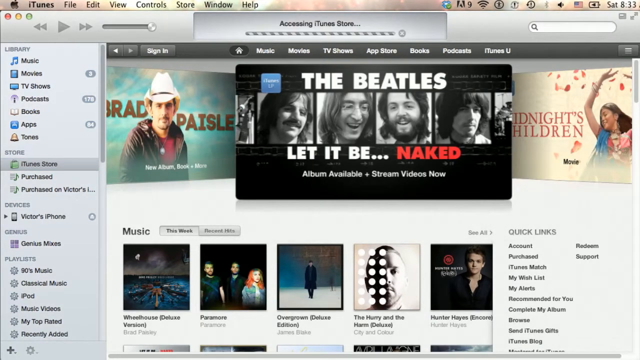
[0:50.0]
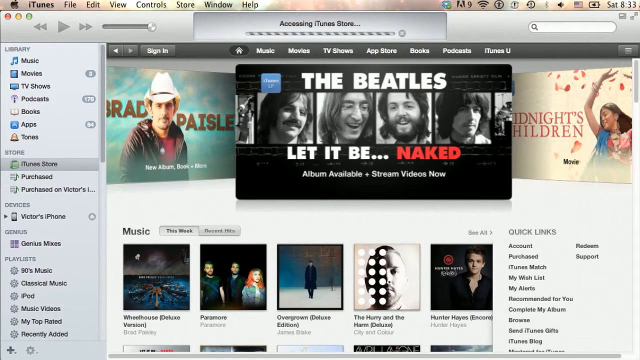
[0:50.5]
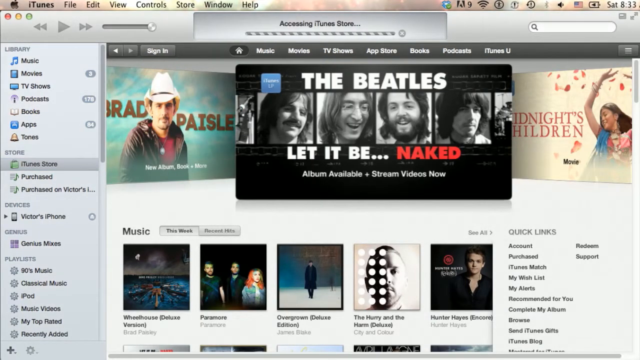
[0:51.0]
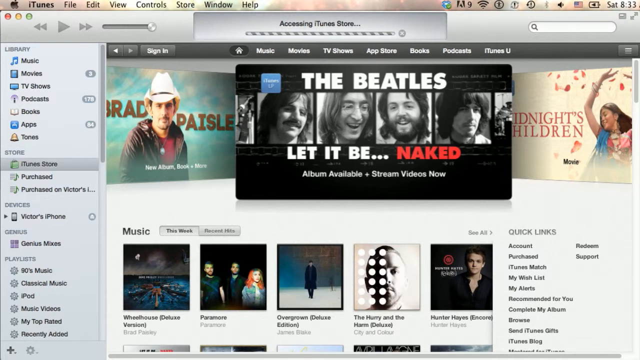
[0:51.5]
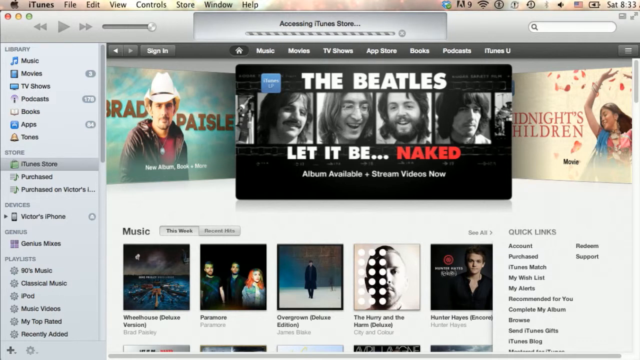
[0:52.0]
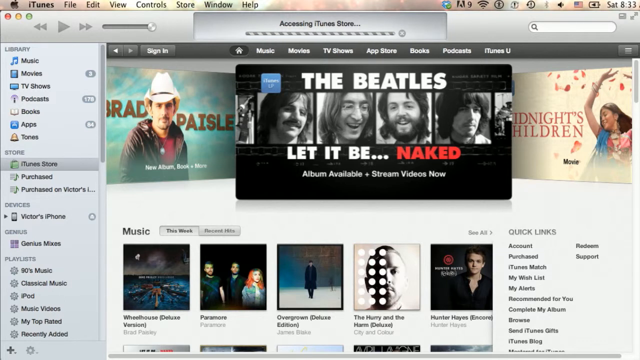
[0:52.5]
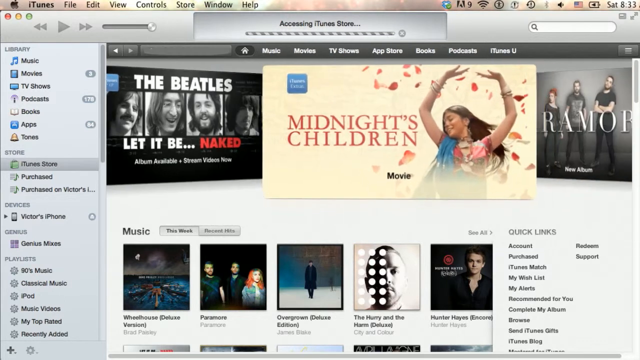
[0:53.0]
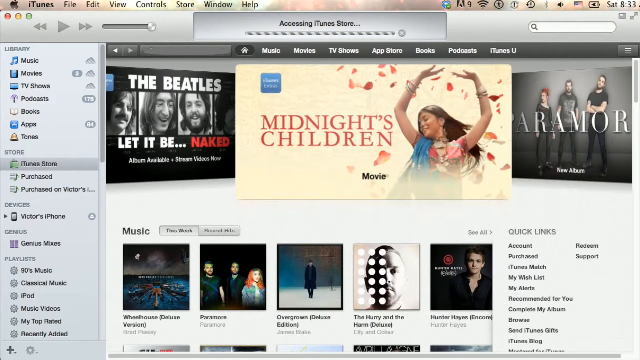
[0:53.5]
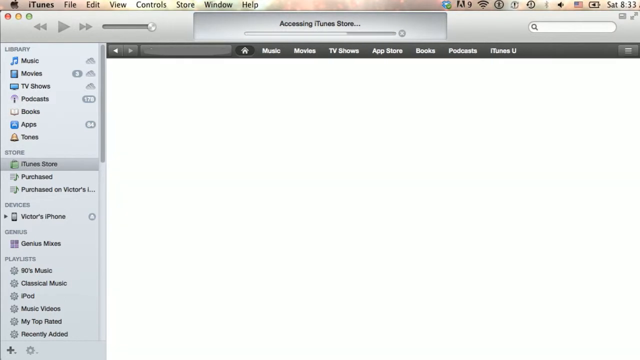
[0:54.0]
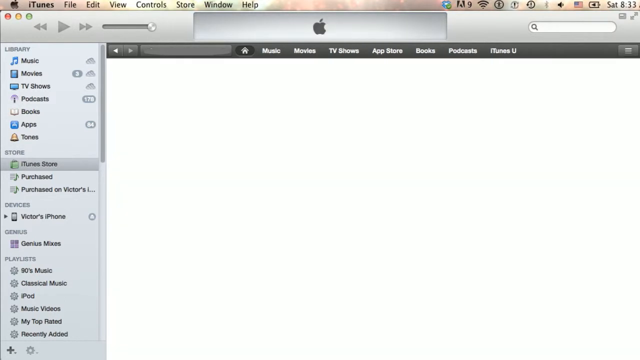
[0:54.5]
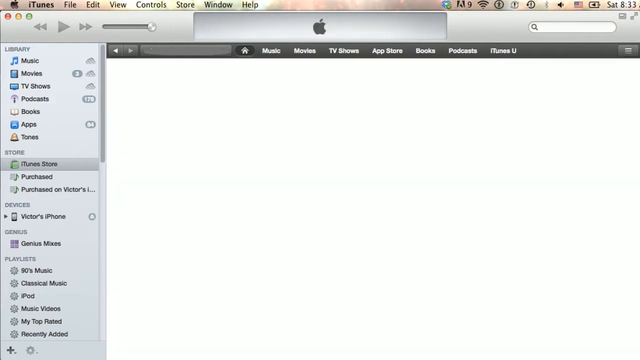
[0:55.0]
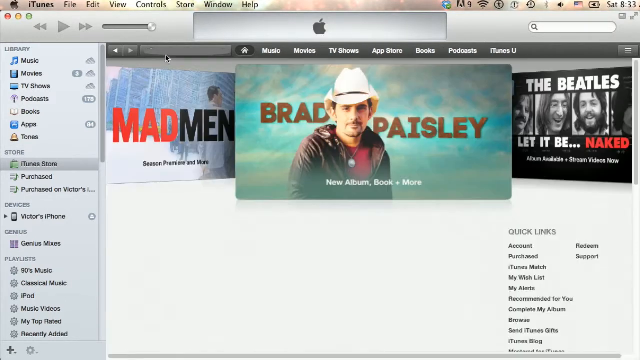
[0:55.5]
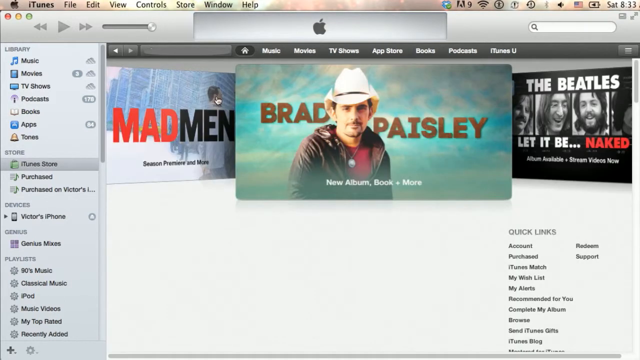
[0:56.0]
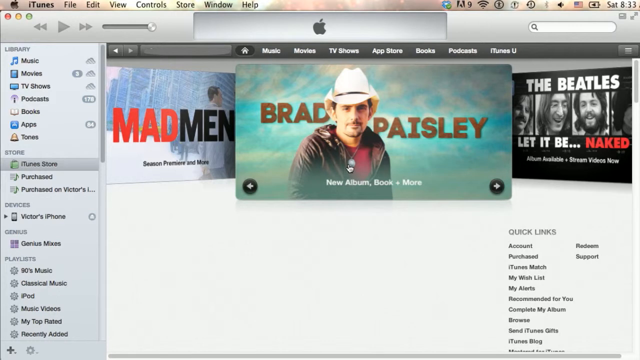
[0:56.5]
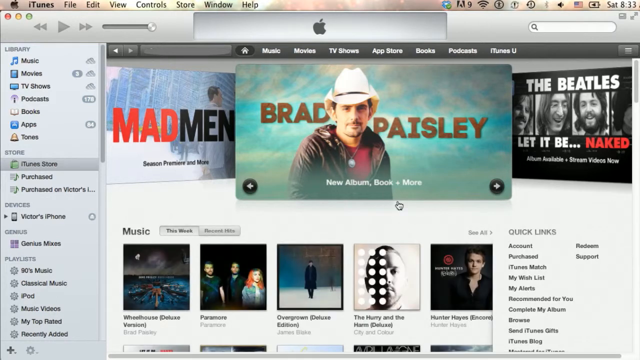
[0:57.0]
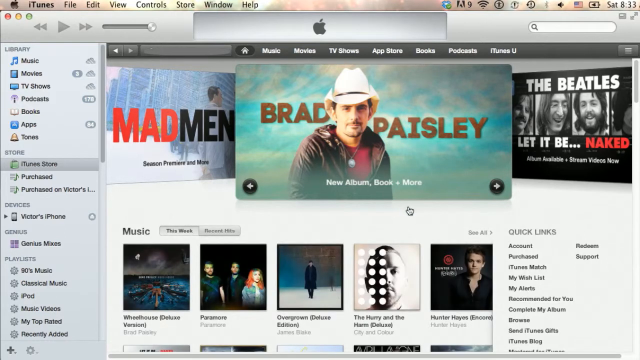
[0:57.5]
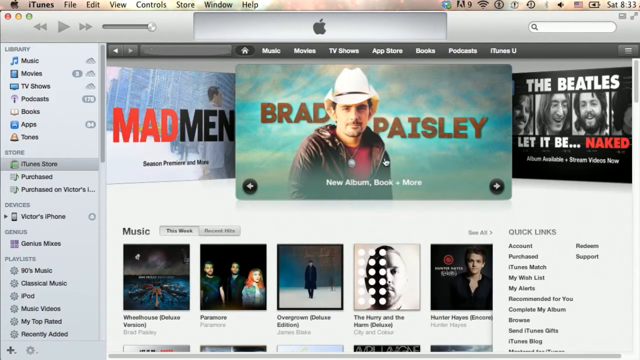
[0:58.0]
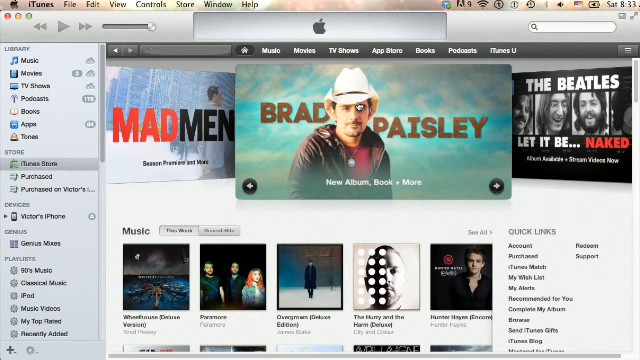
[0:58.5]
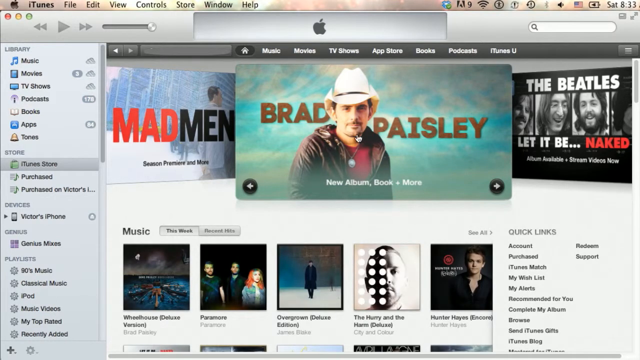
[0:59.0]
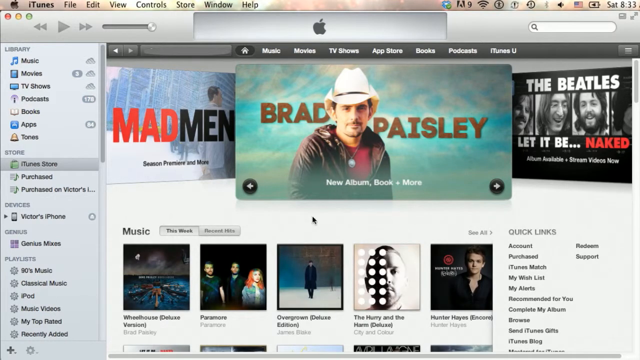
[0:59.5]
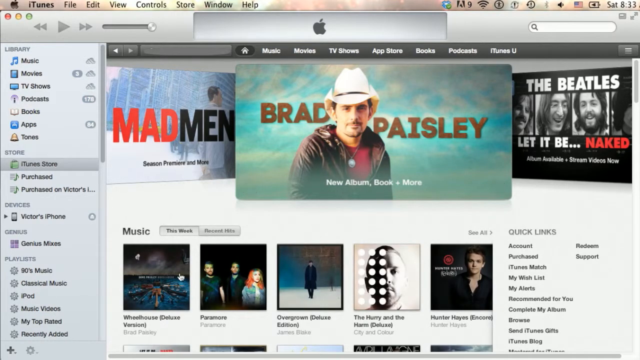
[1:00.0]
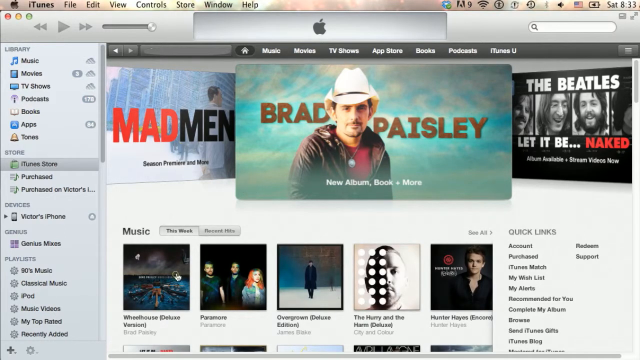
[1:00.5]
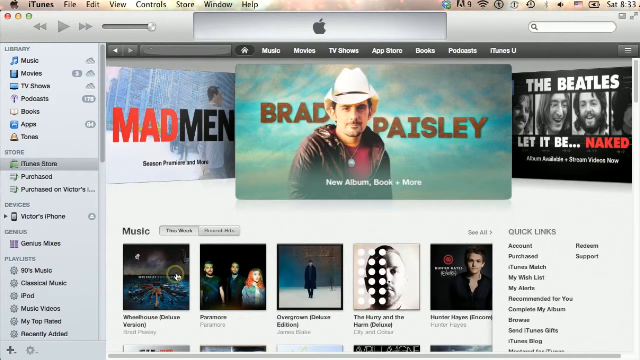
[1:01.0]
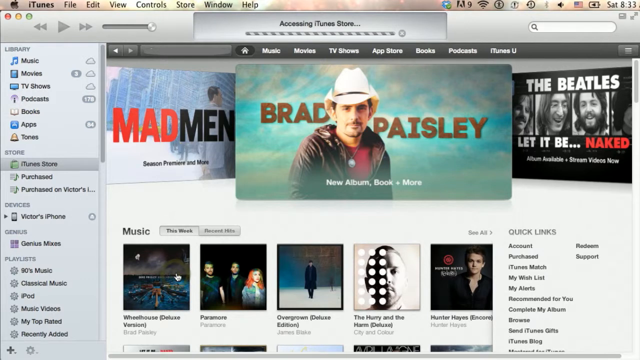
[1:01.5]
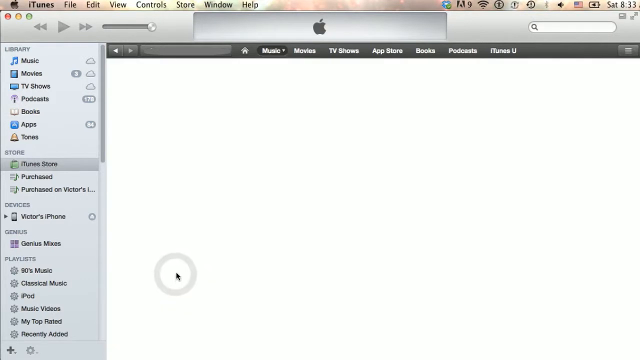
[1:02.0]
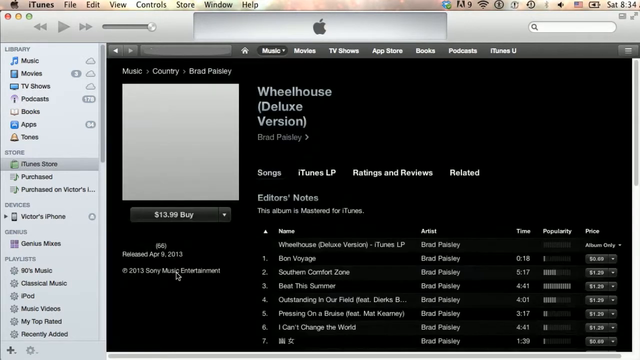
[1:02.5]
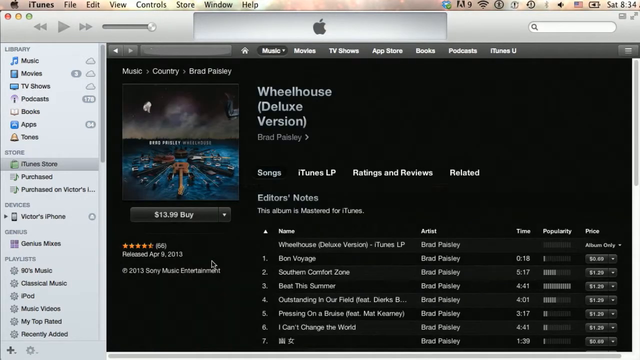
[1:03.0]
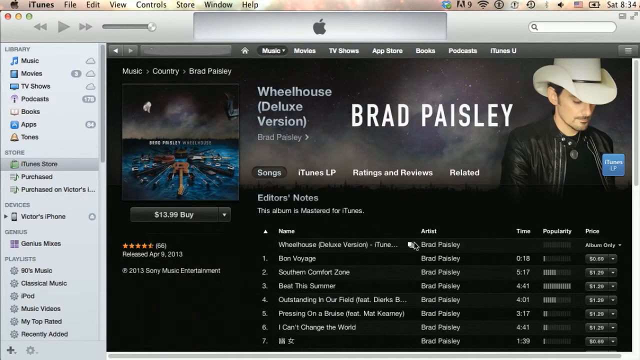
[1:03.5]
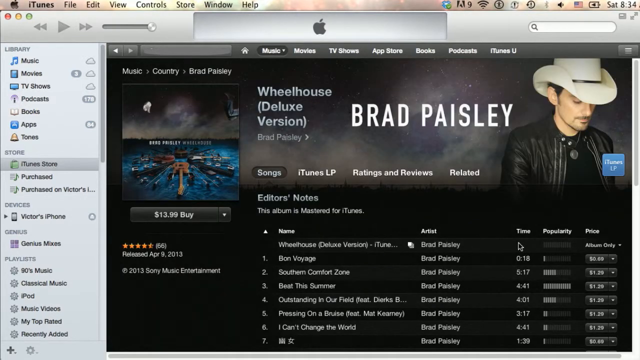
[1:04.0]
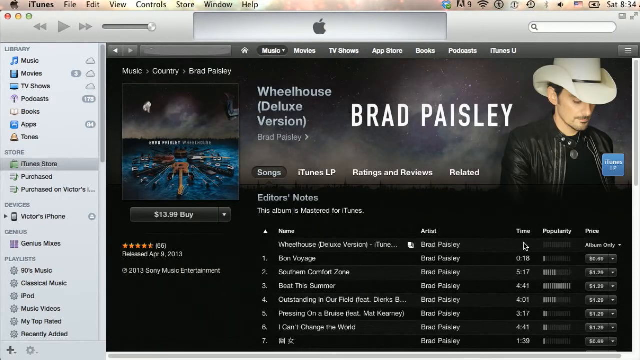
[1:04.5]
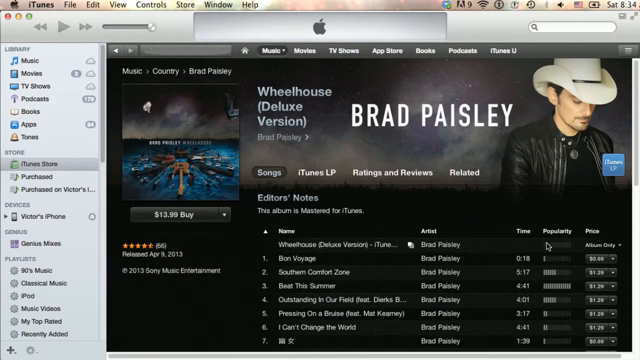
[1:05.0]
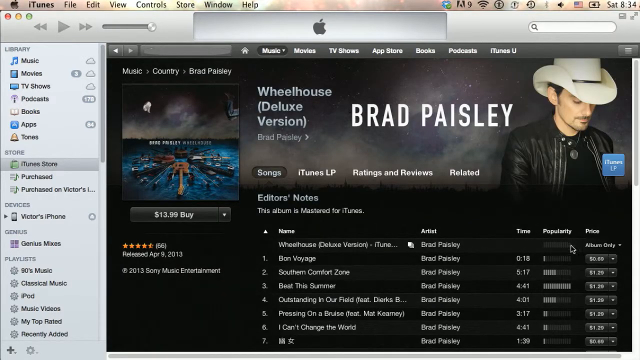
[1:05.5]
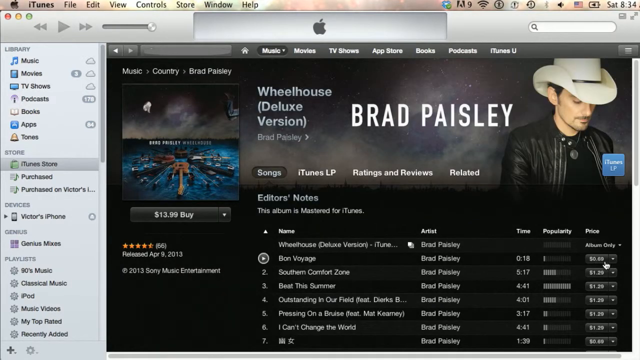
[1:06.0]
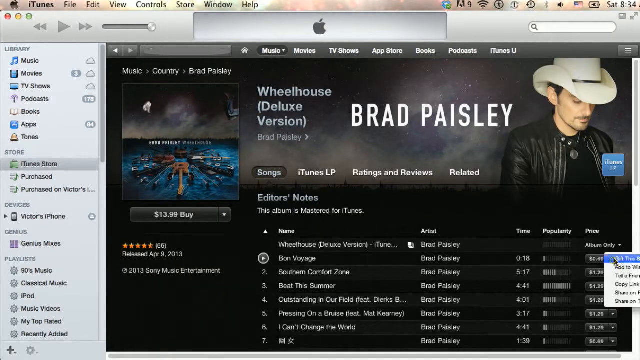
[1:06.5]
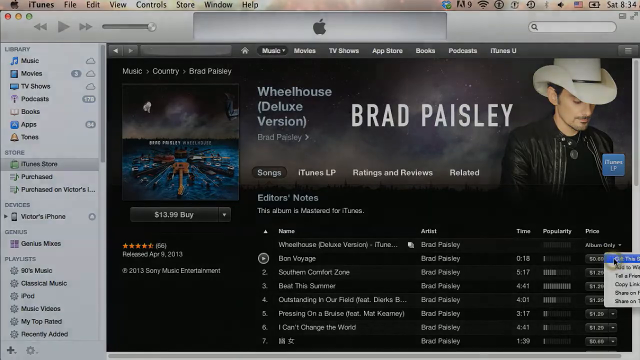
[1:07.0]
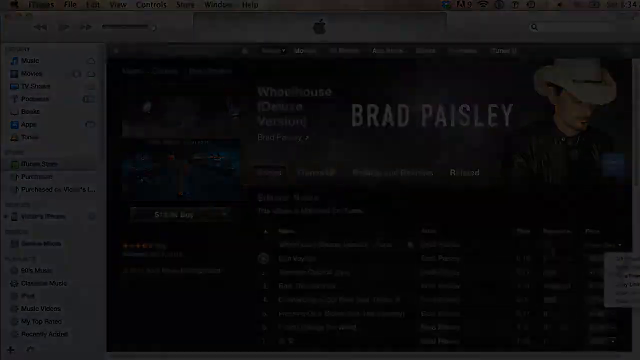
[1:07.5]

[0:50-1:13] The iTunes application is apparently shown on an Apple device, with a navigation bar at the top showing an apple and the items iTunes, File, Edit, View, Control, Store, Windows and Help. The top reads "accessing iTunes store," and a black mouse cursor is visible while it seems to load until the bar finishes. A screen appears that seems to be a music section, with a couple of banners at the top. The mouse moves around and apparently clicks the first option under music, bringing up a page for "wheelhouse deluxe version" with an album cover on the left and "Brad Paisley" in white text on the right. The cursor moves to the first song in the list of songs, which reads "bon voyage" with "album only," and clicks a drop-down menu on the right side of that entry. The video then fades out to black.